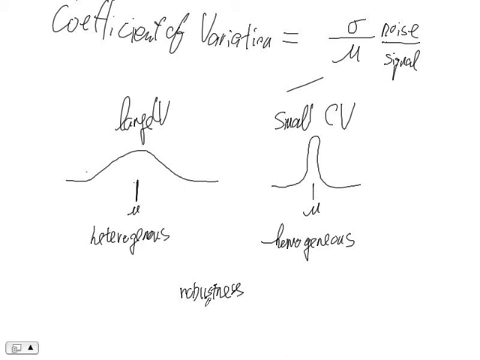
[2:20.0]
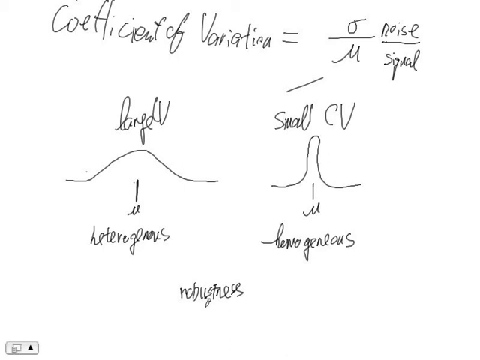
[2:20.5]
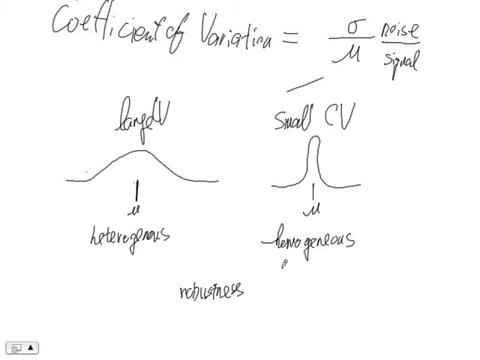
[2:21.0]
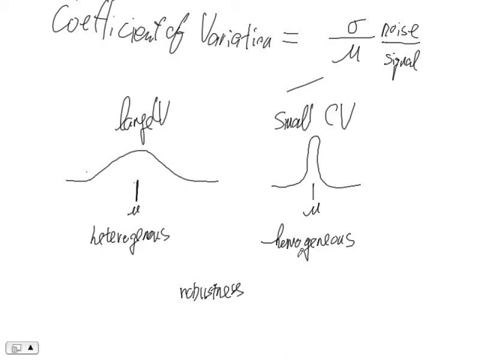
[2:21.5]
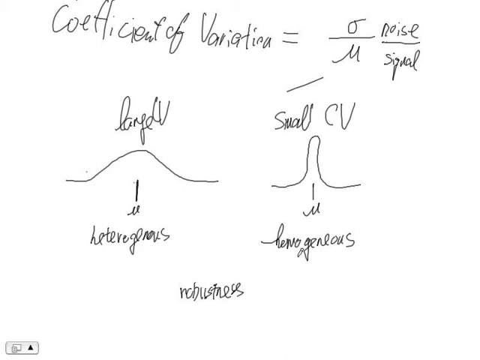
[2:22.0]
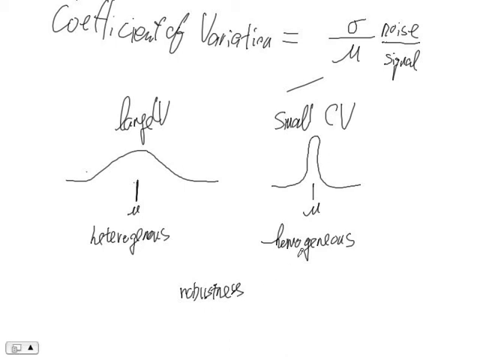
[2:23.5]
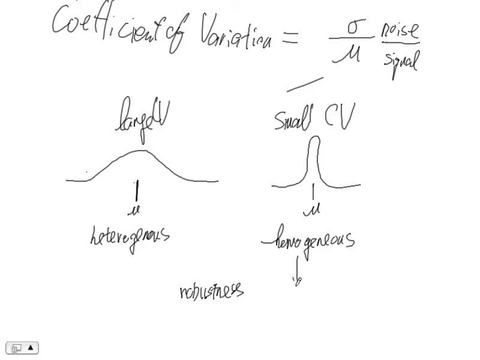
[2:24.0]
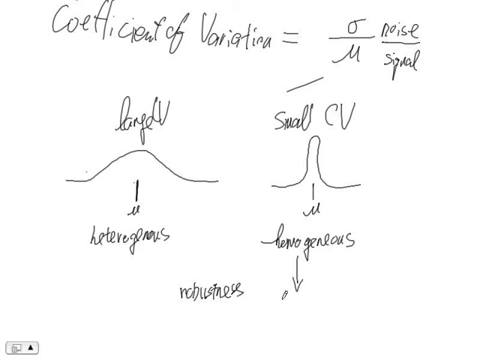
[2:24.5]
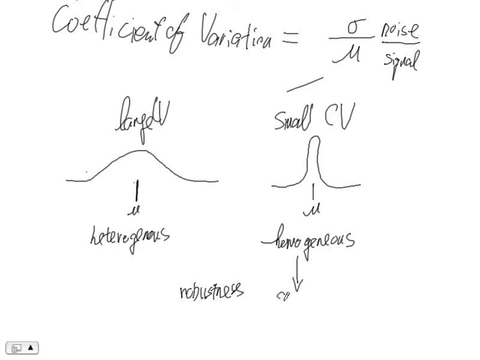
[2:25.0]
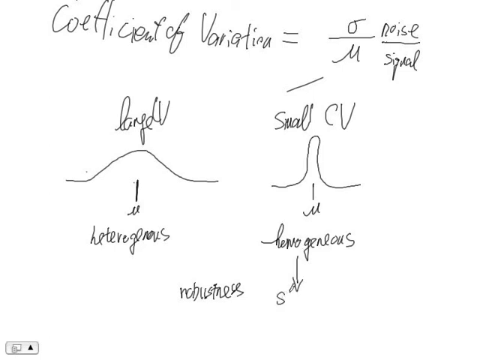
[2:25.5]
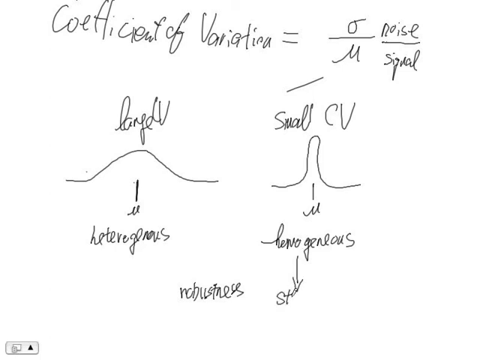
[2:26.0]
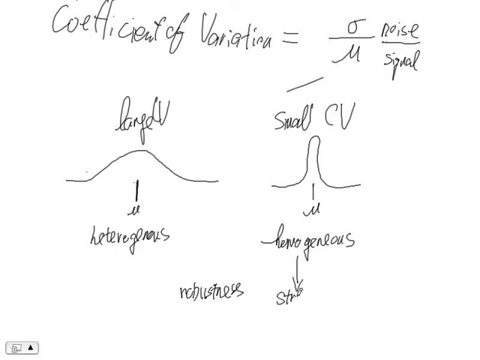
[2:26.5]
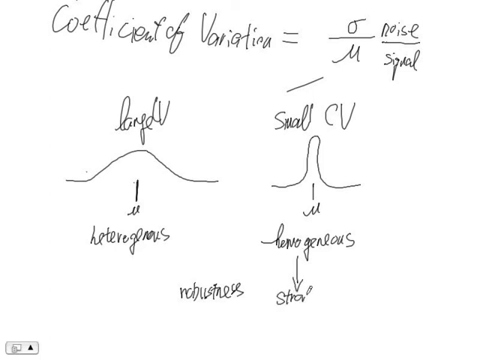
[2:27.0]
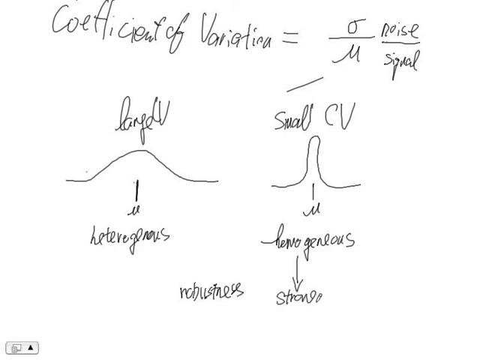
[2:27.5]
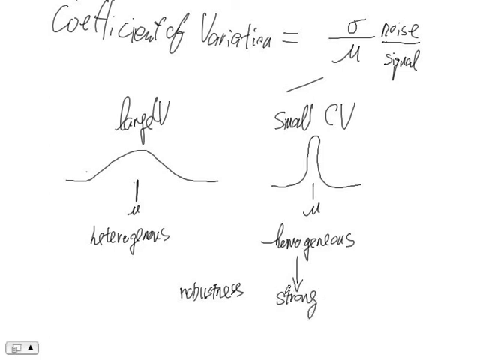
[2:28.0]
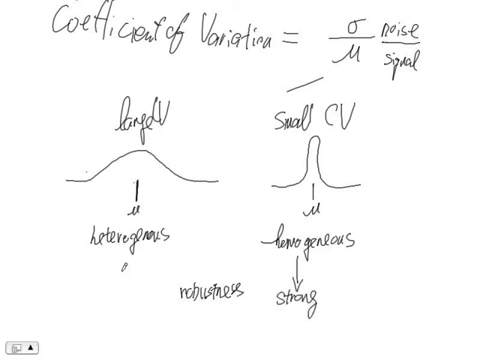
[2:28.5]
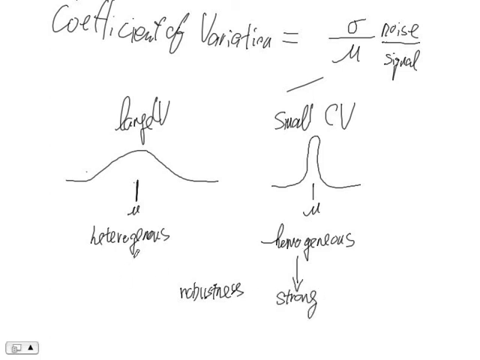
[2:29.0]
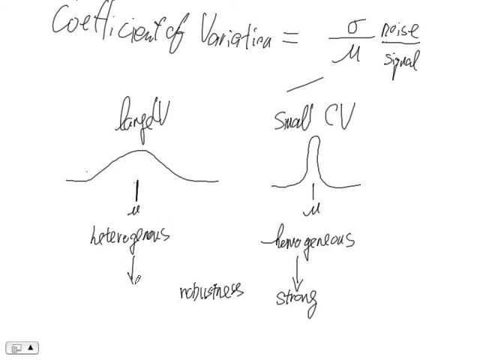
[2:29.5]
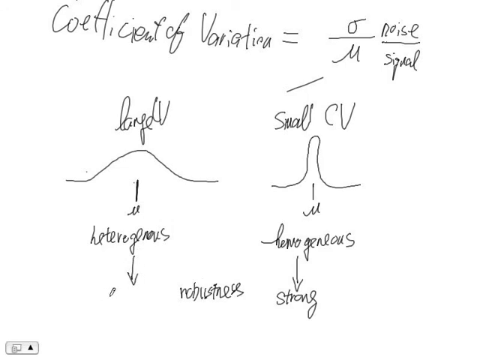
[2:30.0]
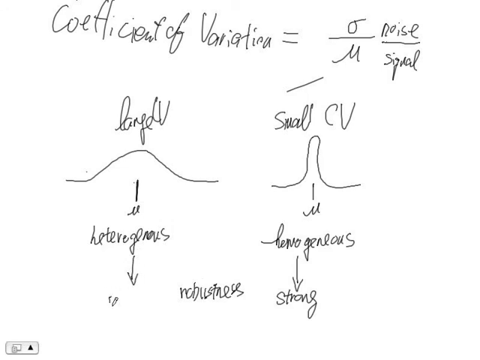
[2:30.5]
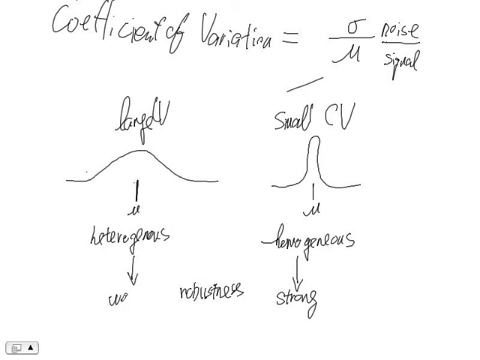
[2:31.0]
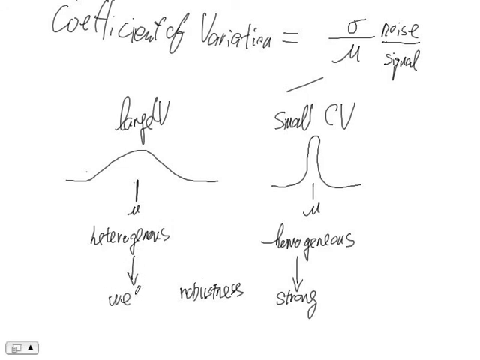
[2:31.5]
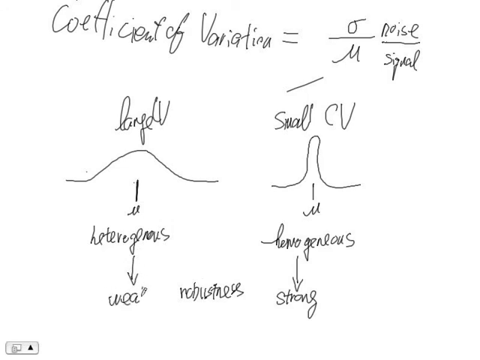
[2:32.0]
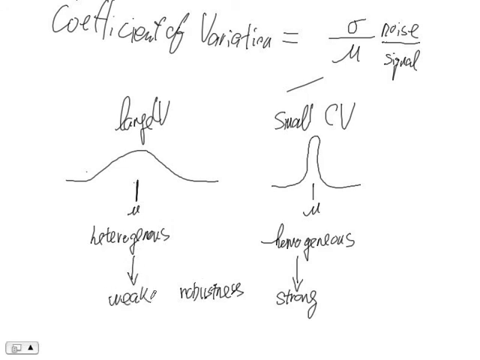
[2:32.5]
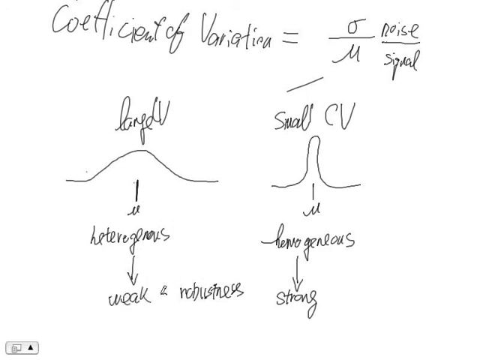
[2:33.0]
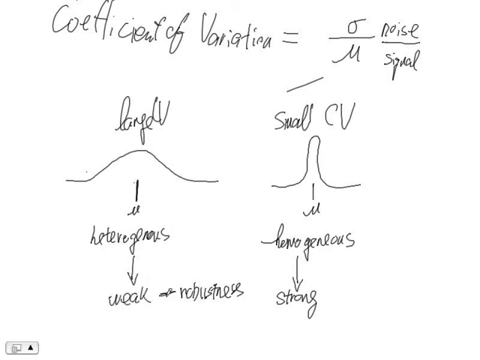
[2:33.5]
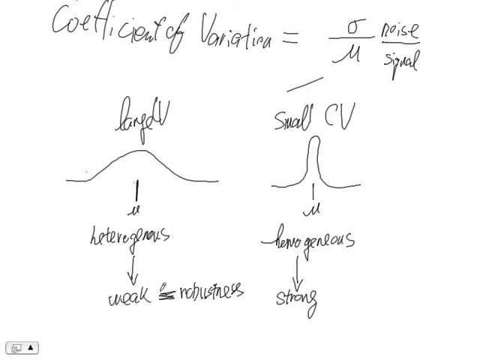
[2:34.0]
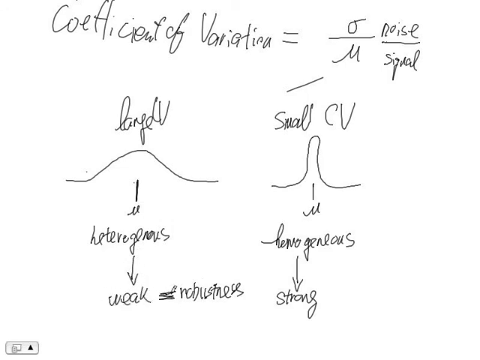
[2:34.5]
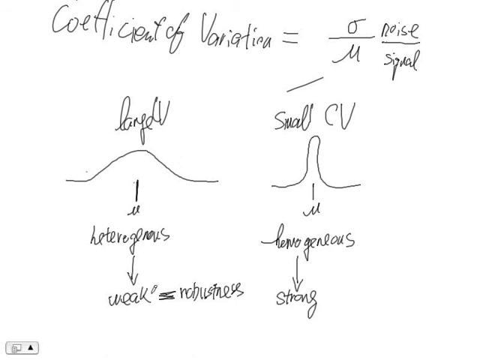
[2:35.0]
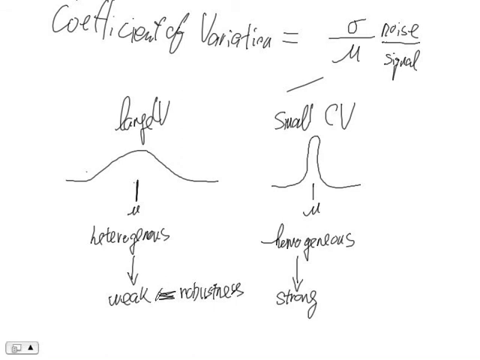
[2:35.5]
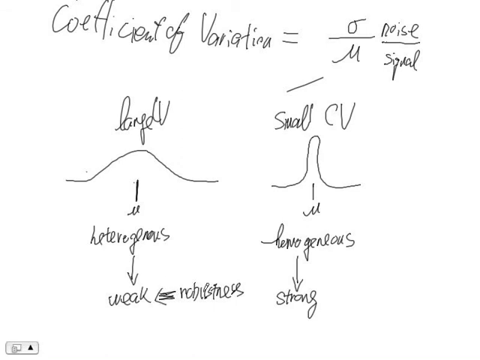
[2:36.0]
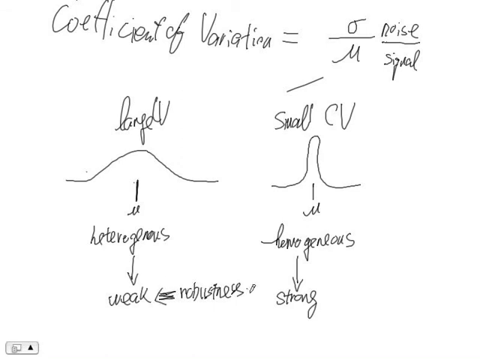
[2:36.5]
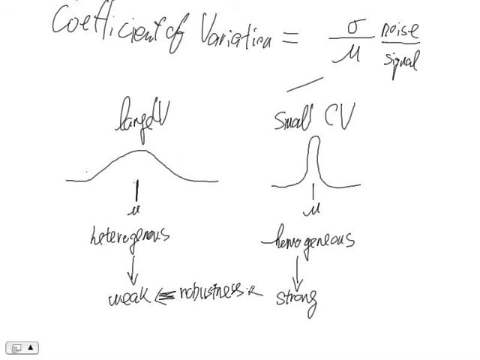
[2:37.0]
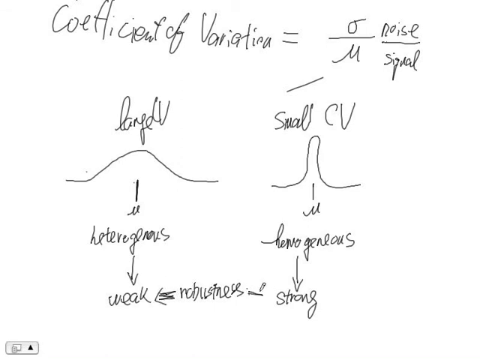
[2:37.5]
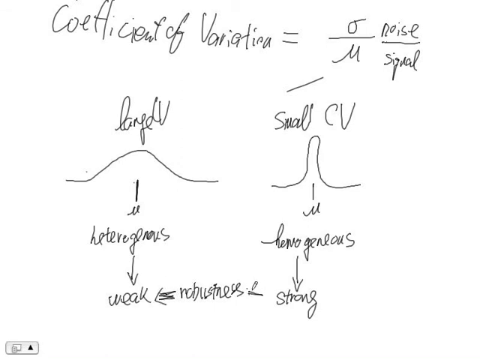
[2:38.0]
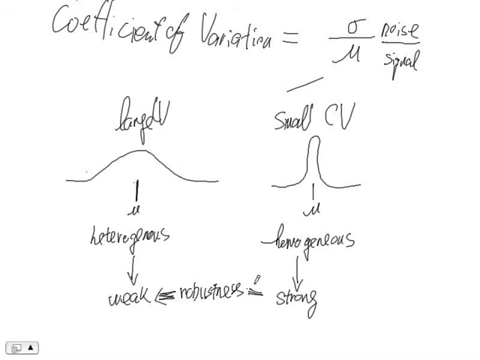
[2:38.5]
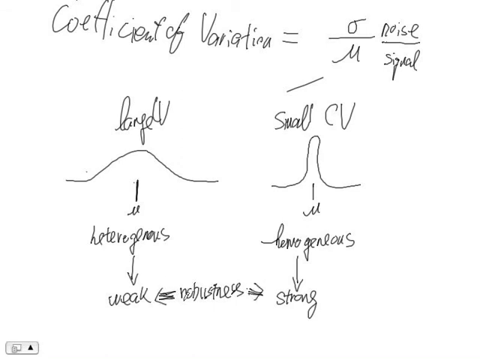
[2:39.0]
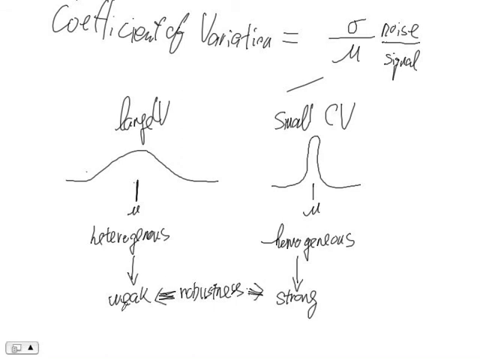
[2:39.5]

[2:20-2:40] "Weak robustness" and "strong robustness" are written: the large V shows weak robustness, while the small CV shows strong robustness. Arrows between them show where they lead, along with the formula and various terms.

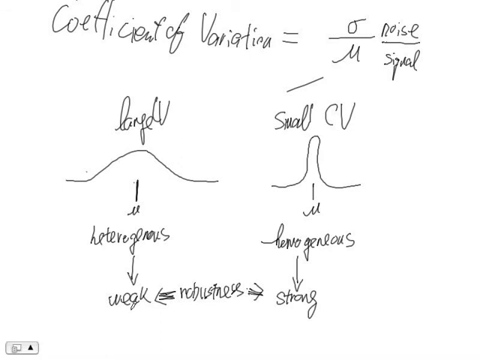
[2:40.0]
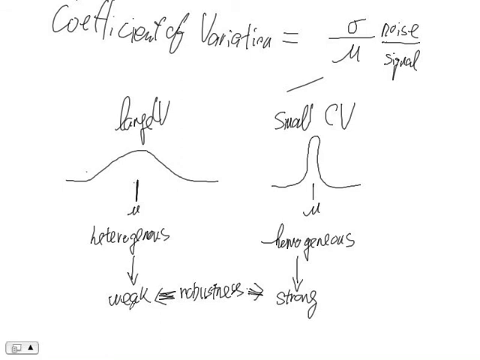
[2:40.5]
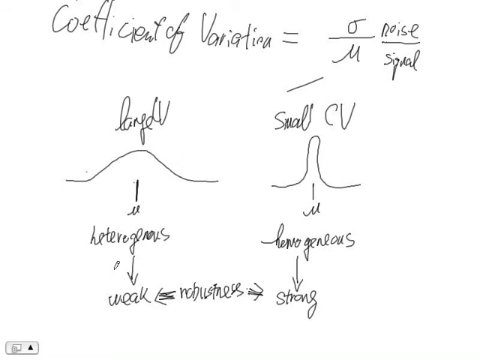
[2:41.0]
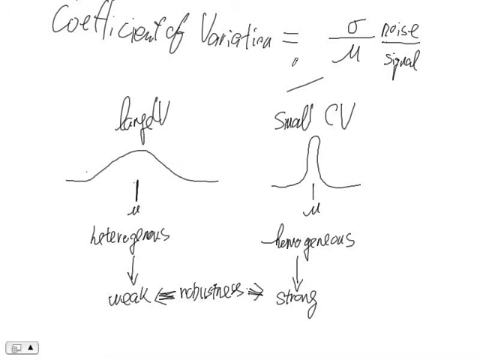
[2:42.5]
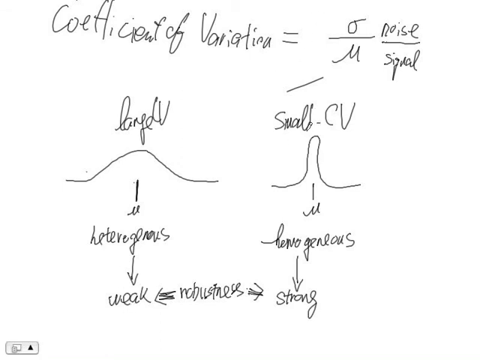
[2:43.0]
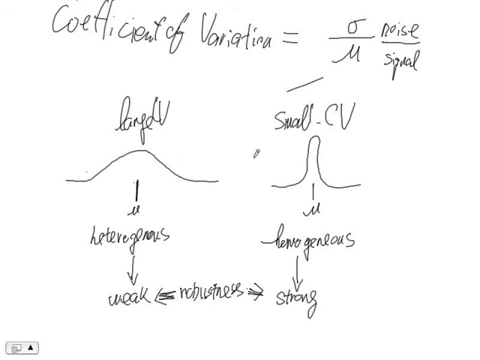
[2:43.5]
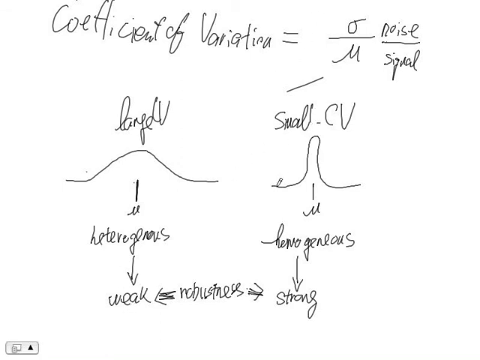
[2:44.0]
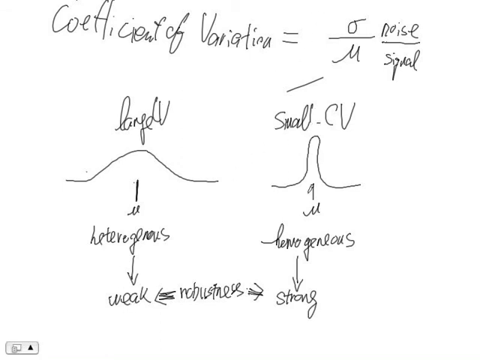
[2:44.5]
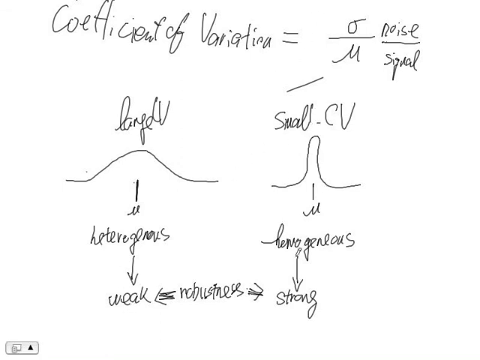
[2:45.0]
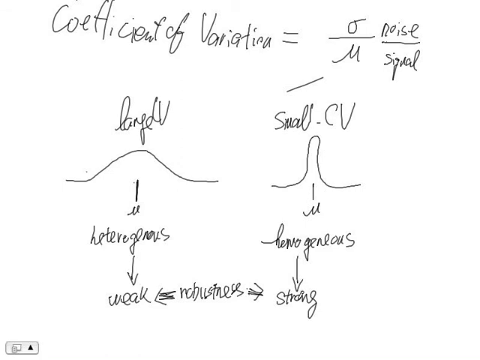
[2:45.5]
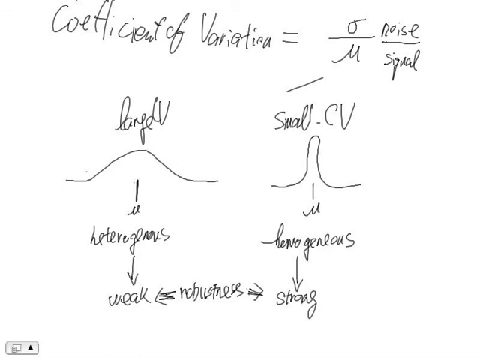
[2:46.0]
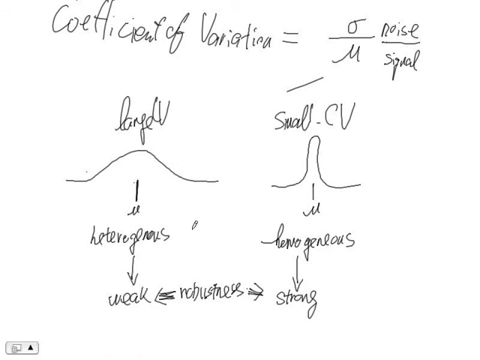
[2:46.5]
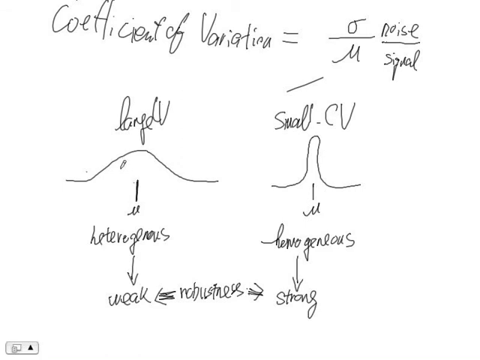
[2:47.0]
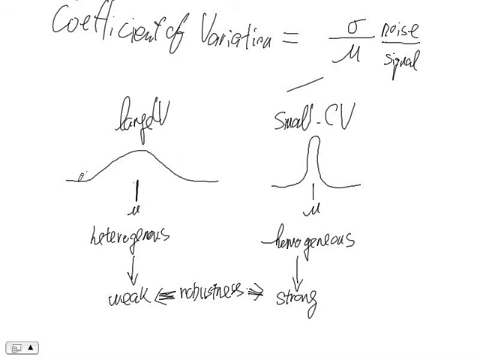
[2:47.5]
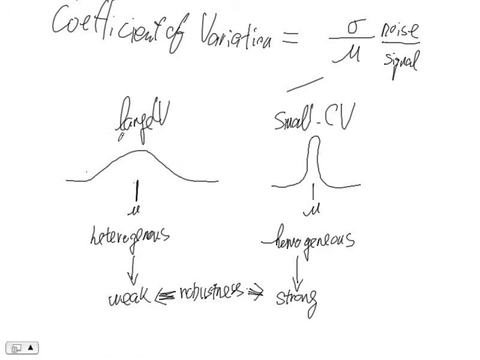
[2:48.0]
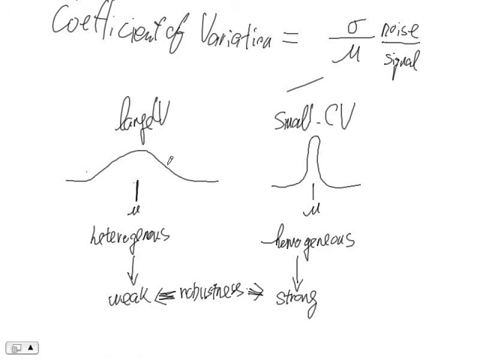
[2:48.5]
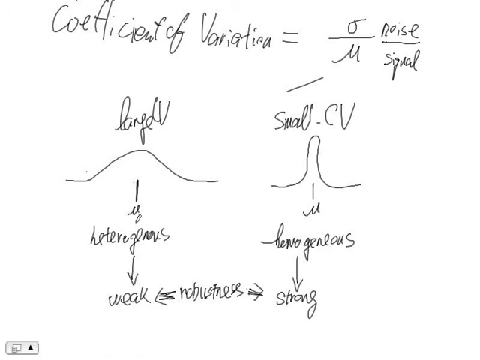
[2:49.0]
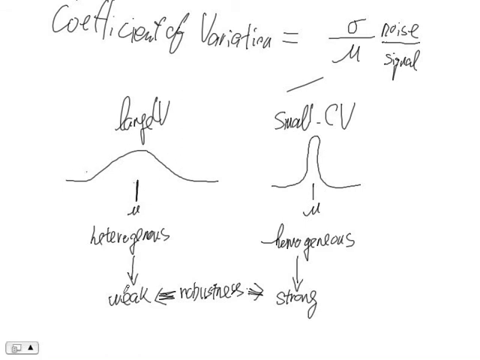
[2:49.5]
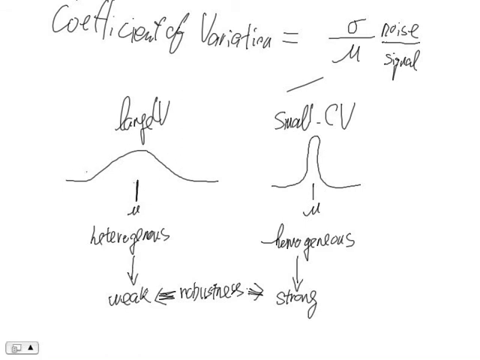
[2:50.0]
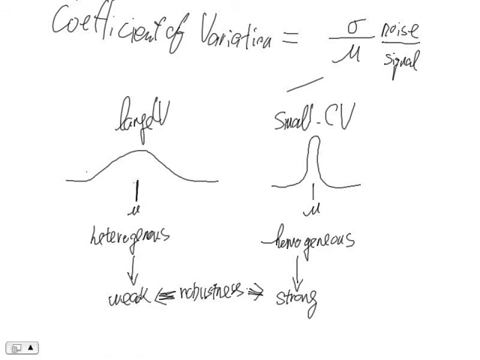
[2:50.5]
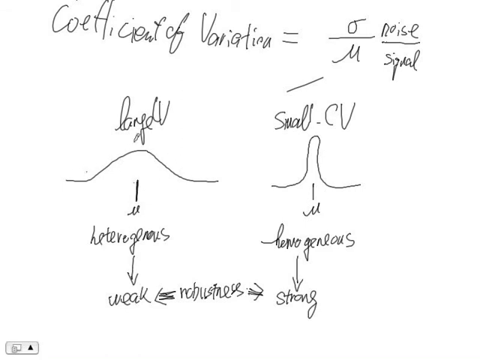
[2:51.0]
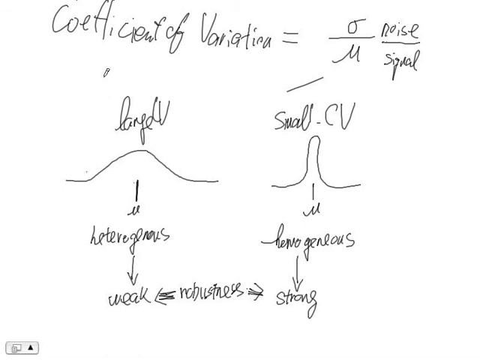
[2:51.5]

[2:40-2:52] Nearing the end of the tutorial, the pencil moves through each drawing and word. The large V has an enlarged diagram in the middle, and the small CV has a diagram enlarged to the highest level. The large V is heterogeneous and weak in robustness, while the small CV is homogeneous and strong in robustness. The coefficient of variation is shown as noise versus speed.